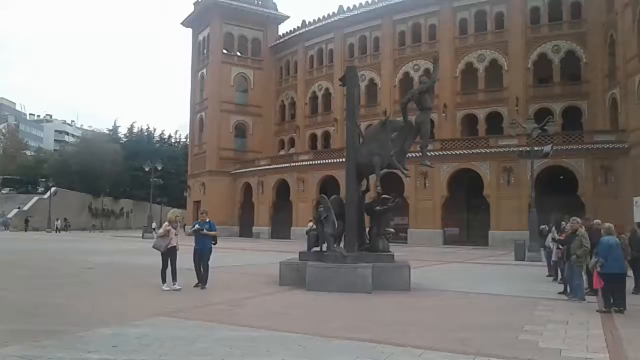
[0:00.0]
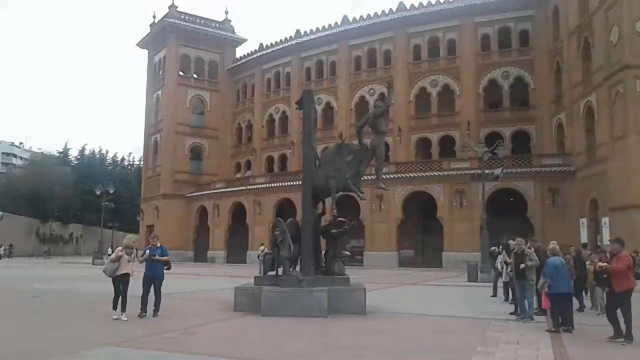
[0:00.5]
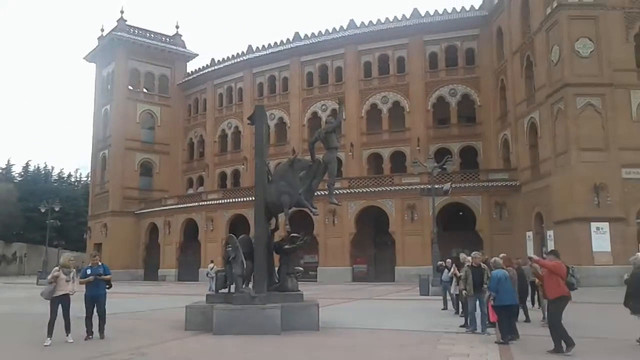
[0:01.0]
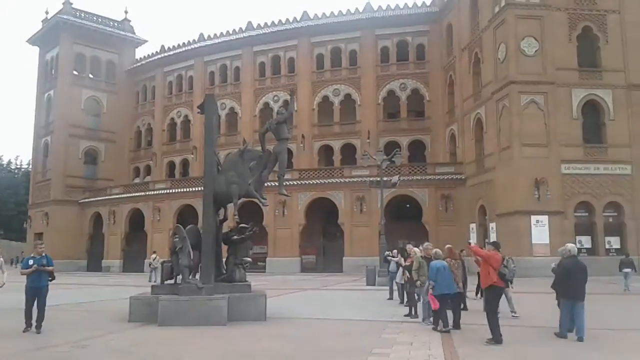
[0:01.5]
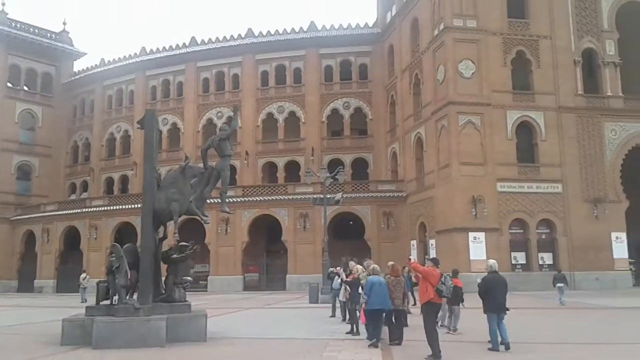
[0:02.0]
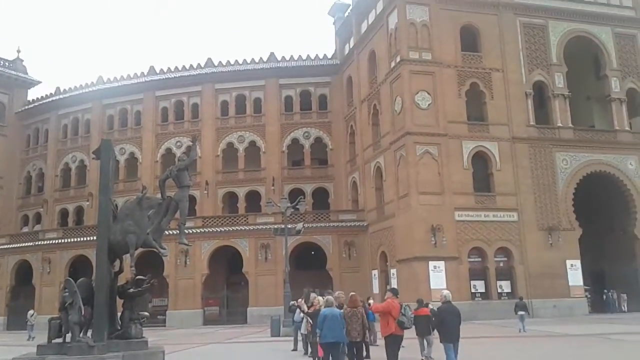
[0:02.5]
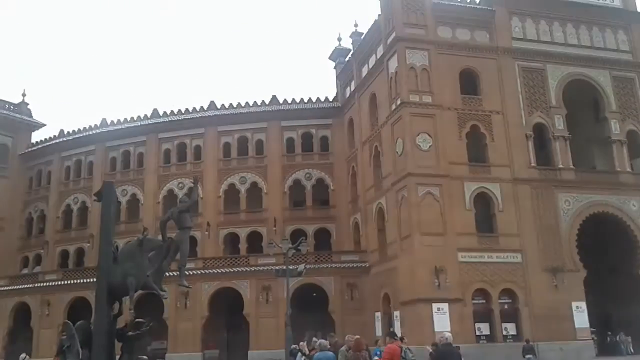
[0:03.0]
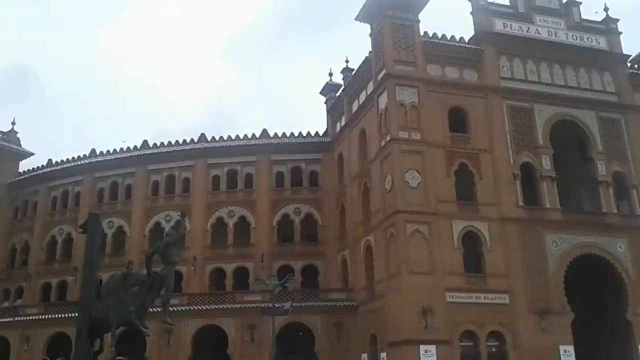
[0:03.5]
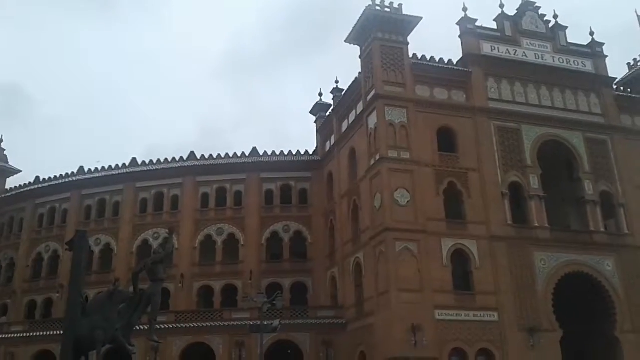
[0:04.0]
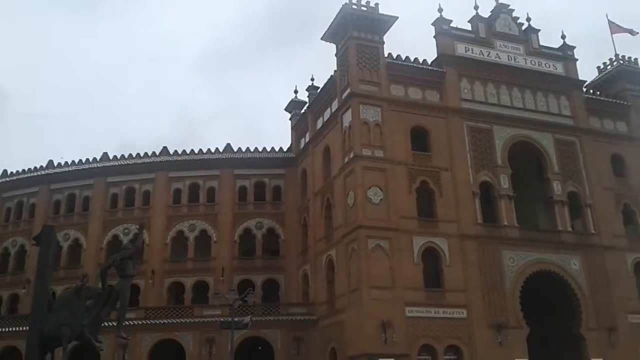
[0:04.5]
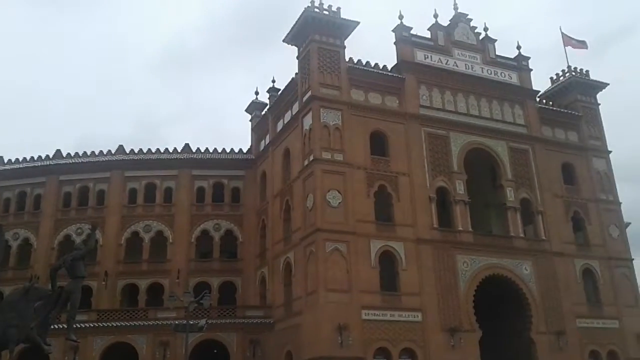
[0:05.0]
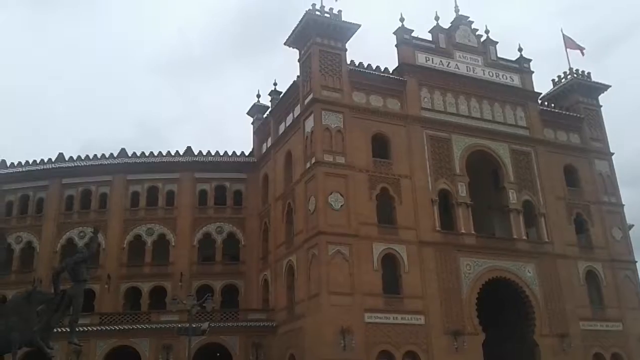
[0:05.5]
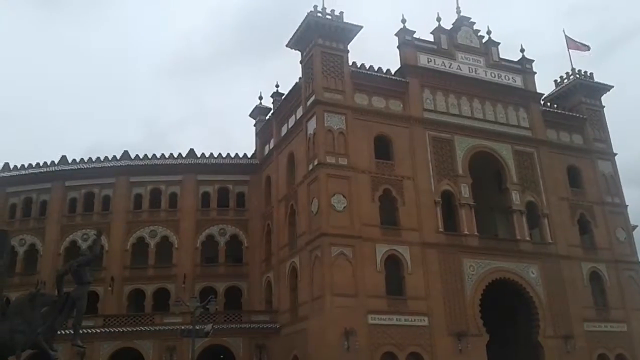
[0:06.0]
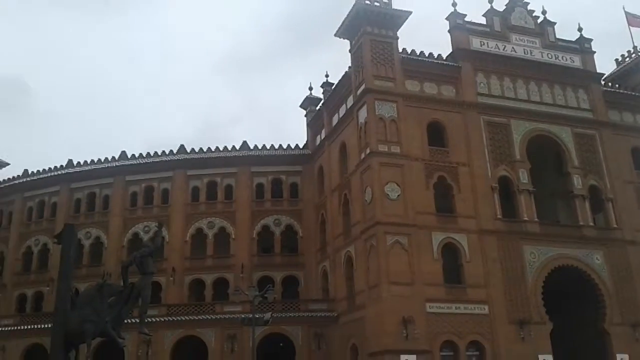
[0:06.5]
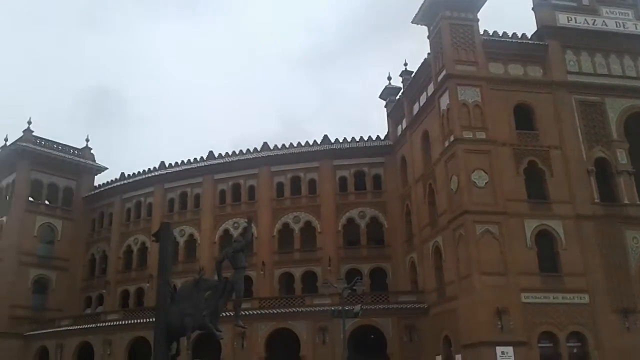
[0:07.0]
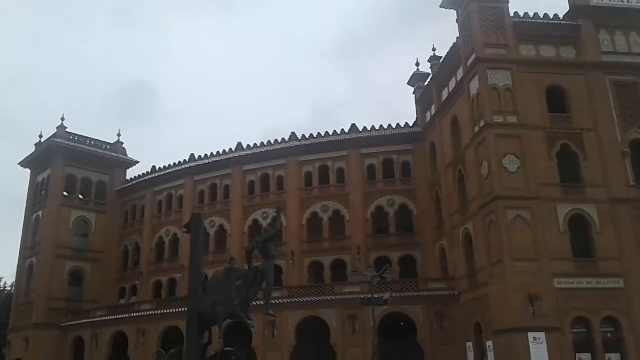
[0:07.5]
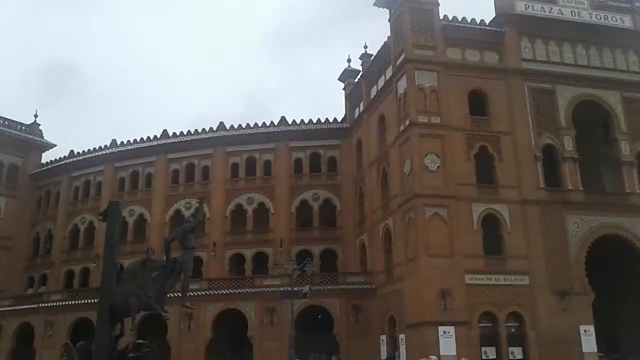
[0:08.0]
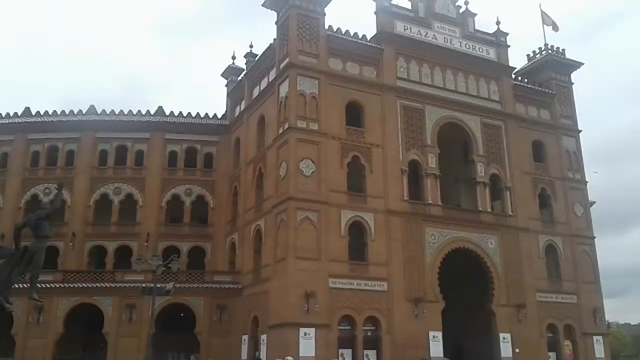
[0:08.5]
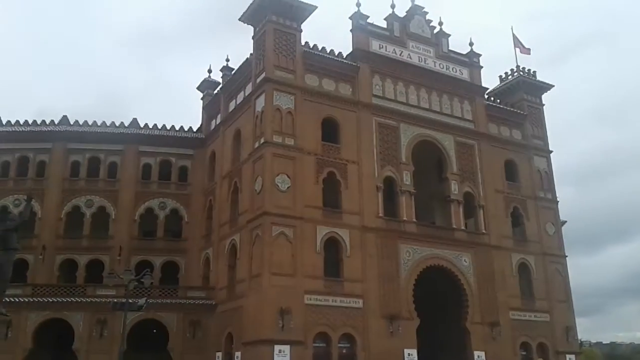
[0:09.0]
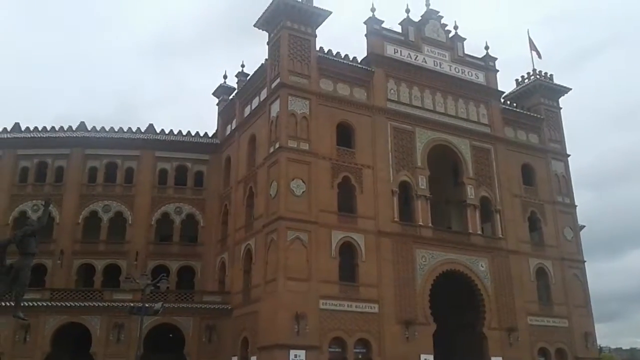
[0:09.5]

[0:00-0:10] The setting appears to be the Plaza de Toros, possibly in Spain or Italy. A large Coliseum-style building with grand arches is shown, along with a statue of what seems to be a bullfighter. Small groups of people, maybe 30 overall, are scattered around the plaza, and most of them appear to be sightseeing, looking around. The setting stays the same, and the view changes to show more of the building and more of the sky, cutting out the people. A sign above the building reads "Plaza de Toros."